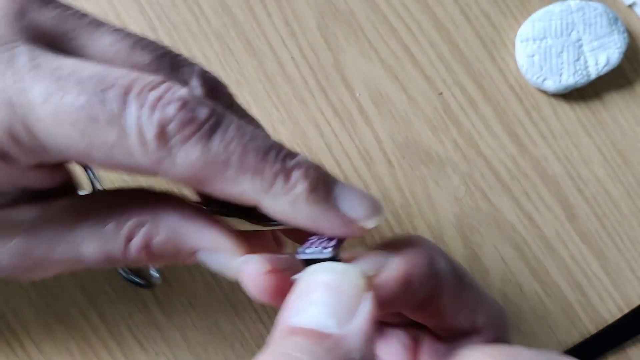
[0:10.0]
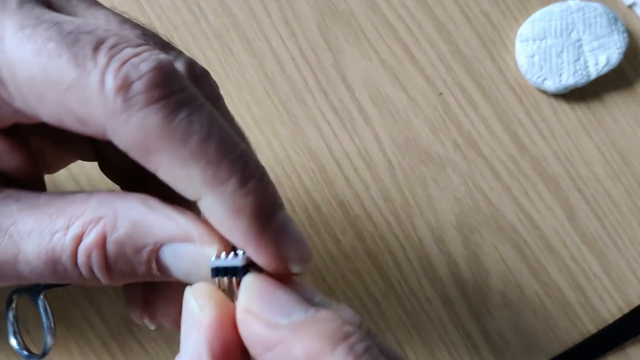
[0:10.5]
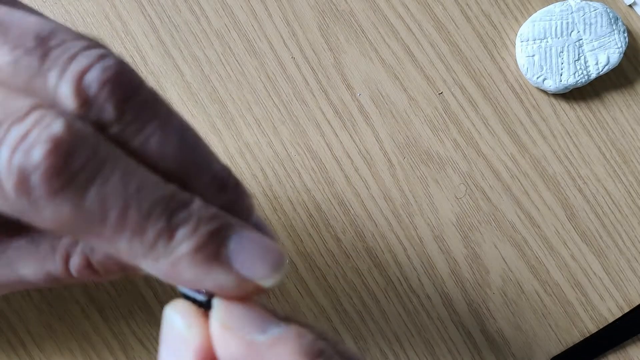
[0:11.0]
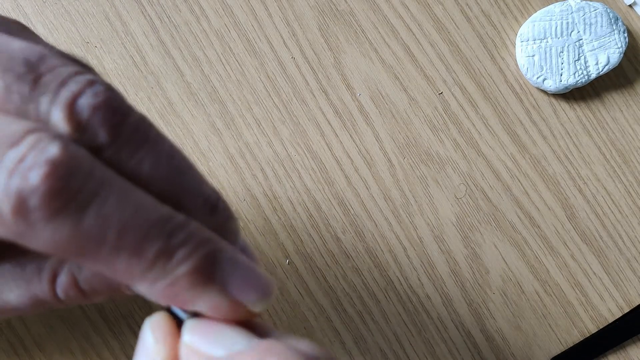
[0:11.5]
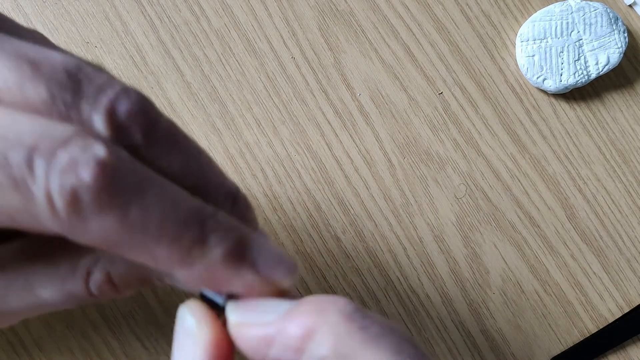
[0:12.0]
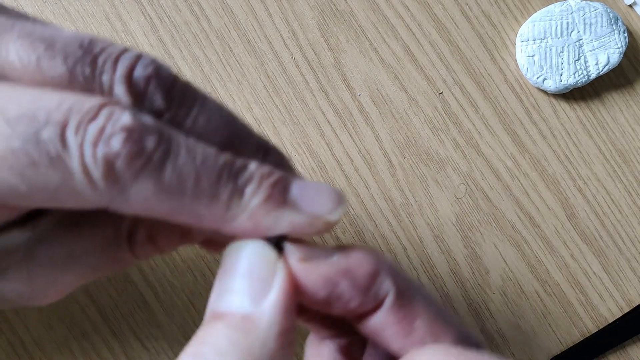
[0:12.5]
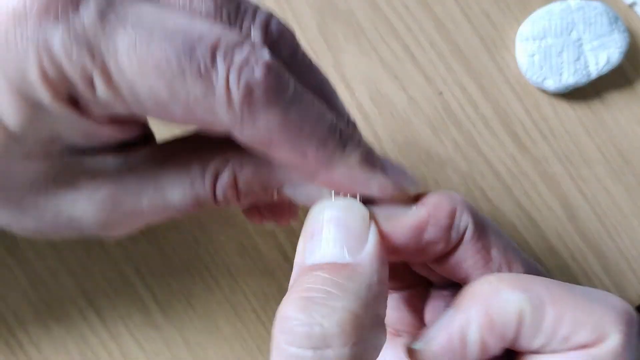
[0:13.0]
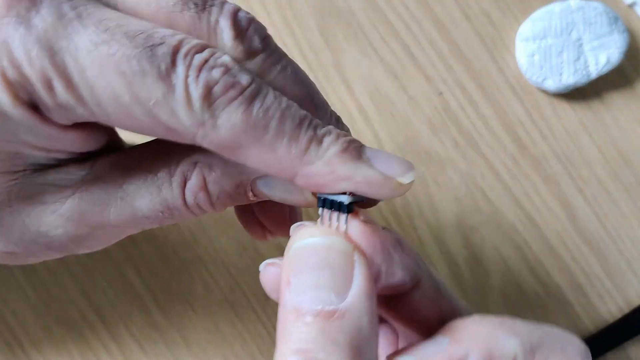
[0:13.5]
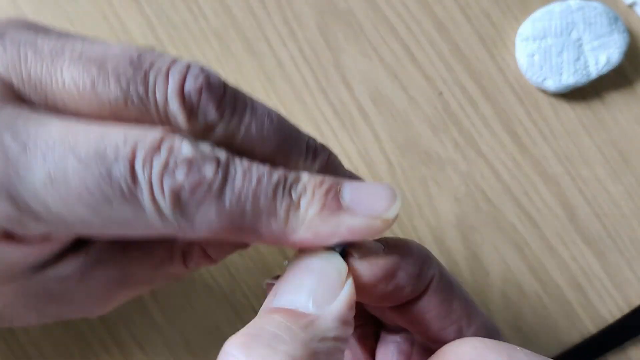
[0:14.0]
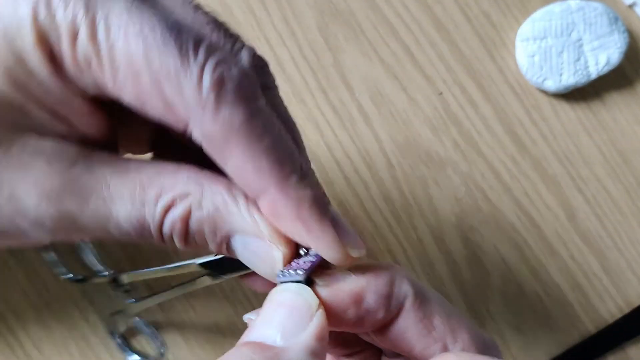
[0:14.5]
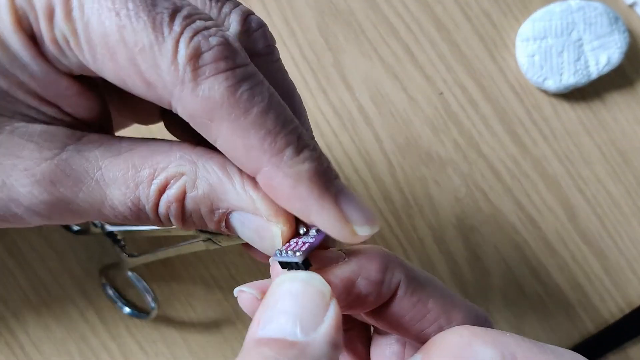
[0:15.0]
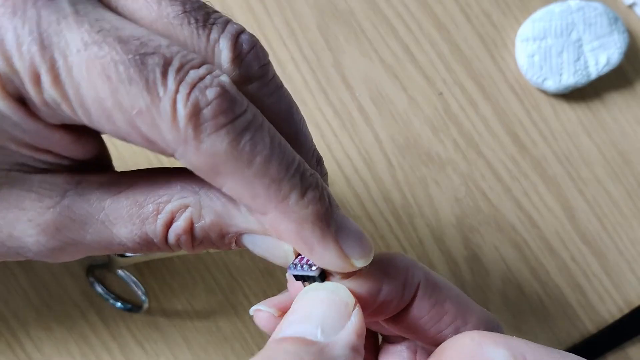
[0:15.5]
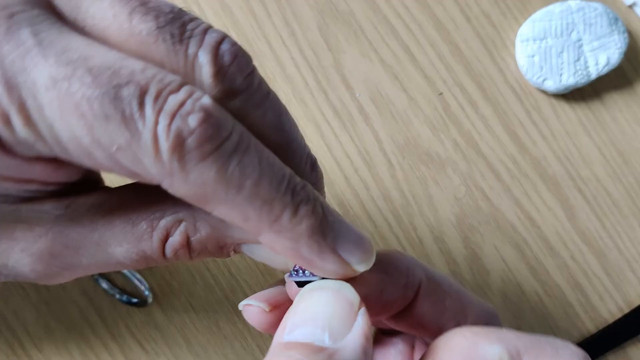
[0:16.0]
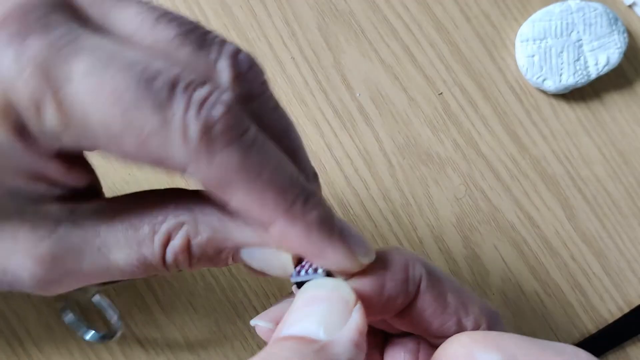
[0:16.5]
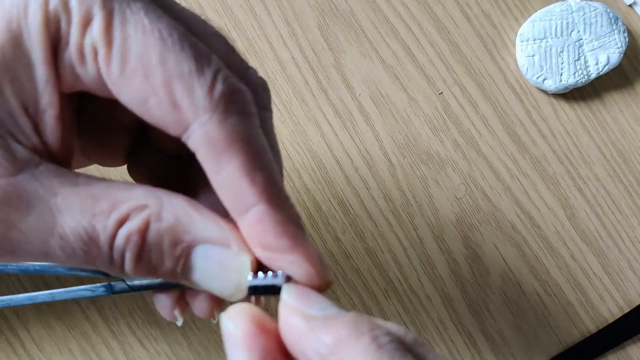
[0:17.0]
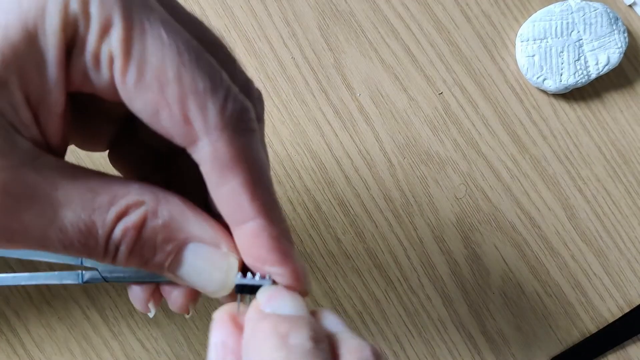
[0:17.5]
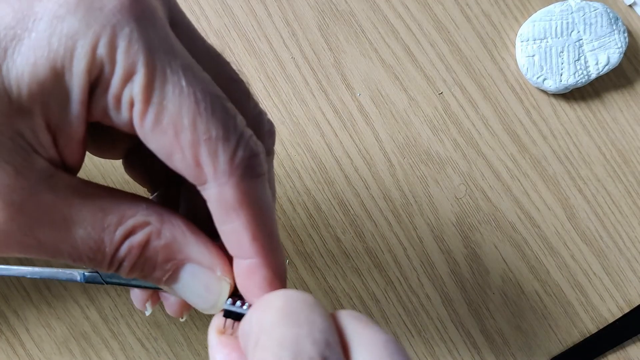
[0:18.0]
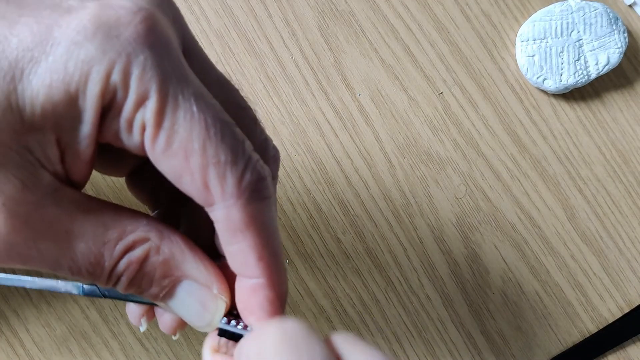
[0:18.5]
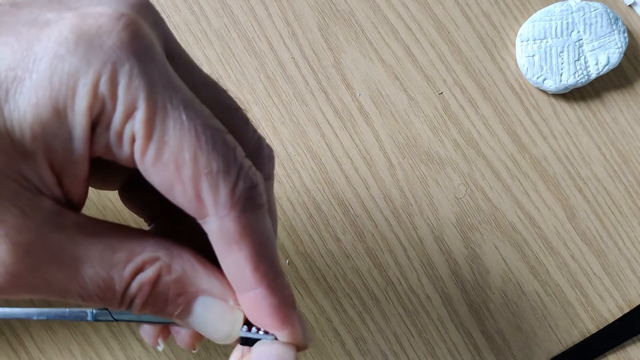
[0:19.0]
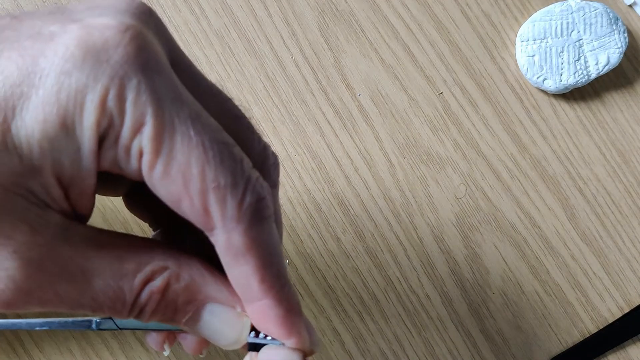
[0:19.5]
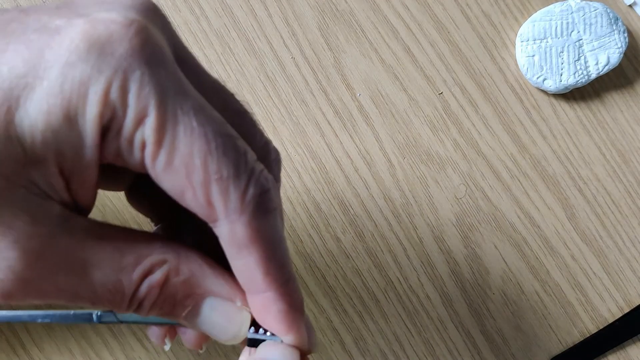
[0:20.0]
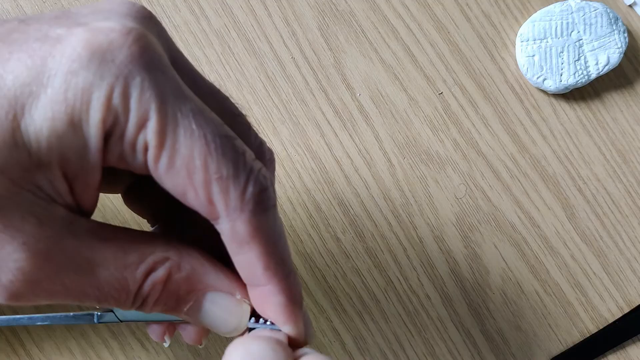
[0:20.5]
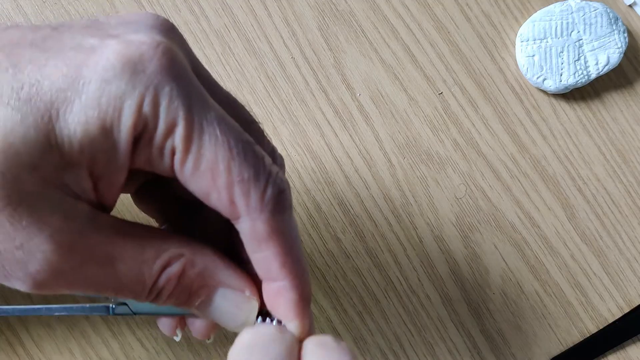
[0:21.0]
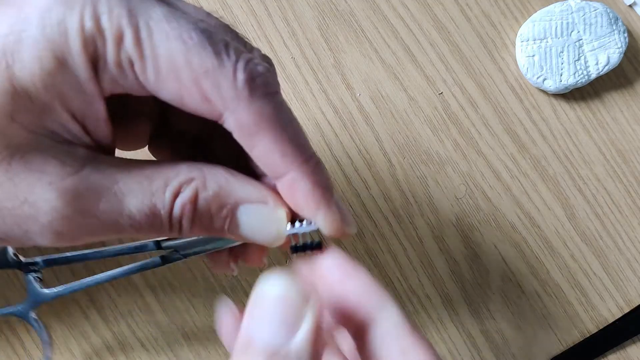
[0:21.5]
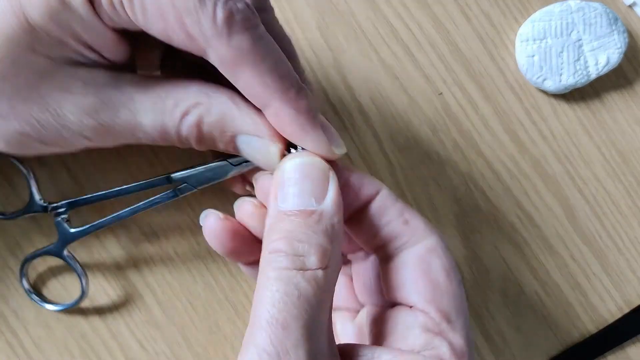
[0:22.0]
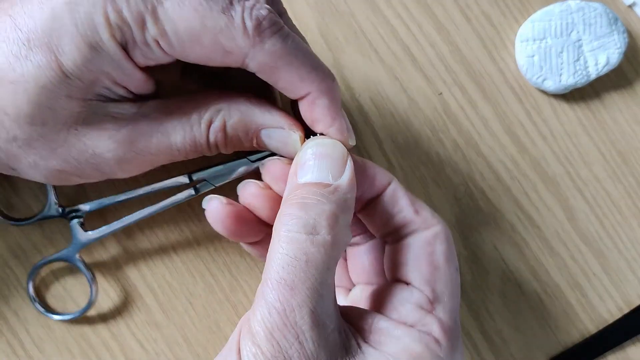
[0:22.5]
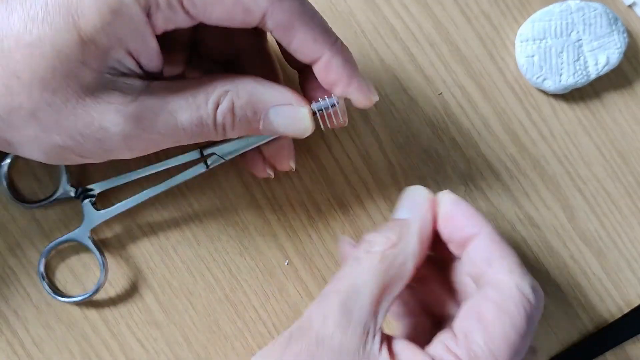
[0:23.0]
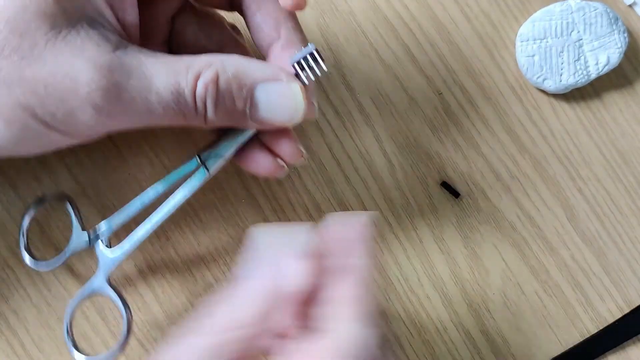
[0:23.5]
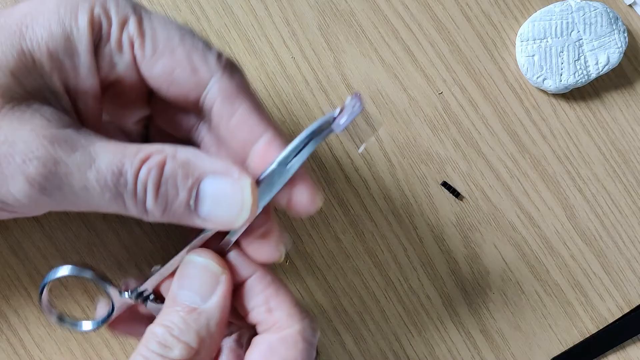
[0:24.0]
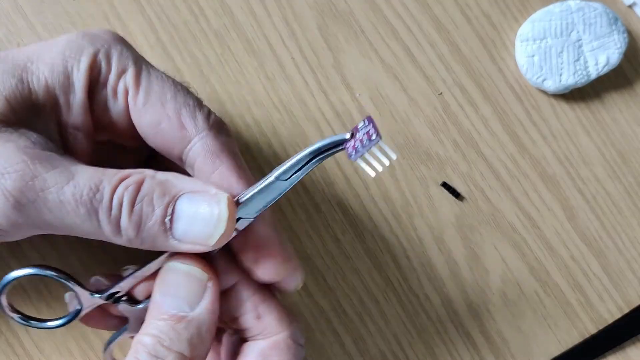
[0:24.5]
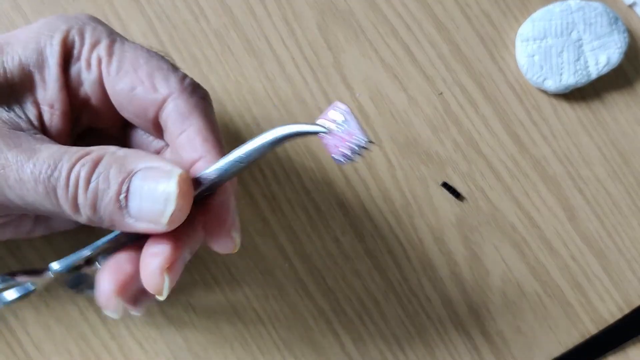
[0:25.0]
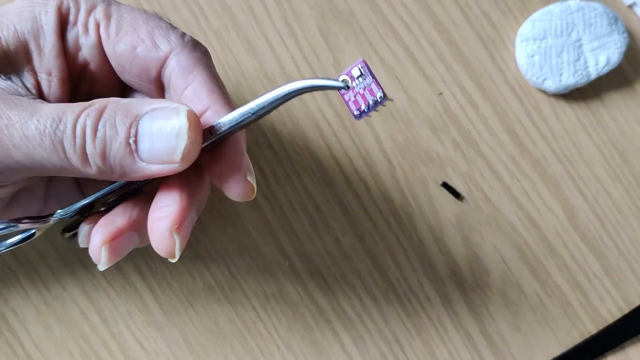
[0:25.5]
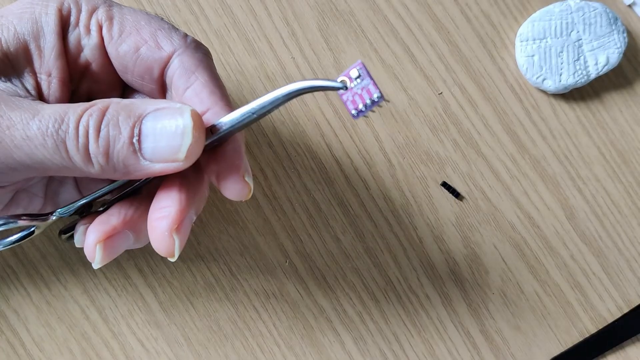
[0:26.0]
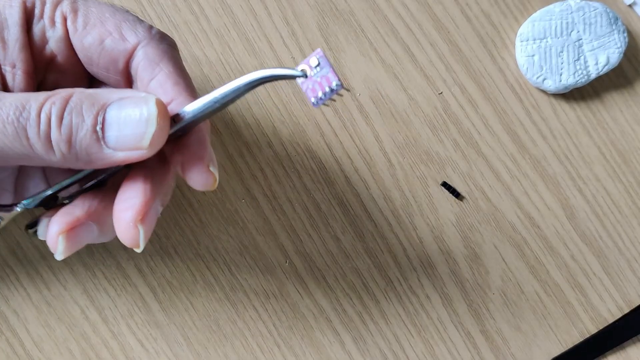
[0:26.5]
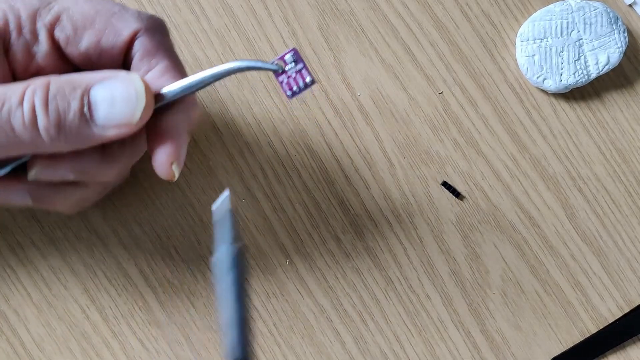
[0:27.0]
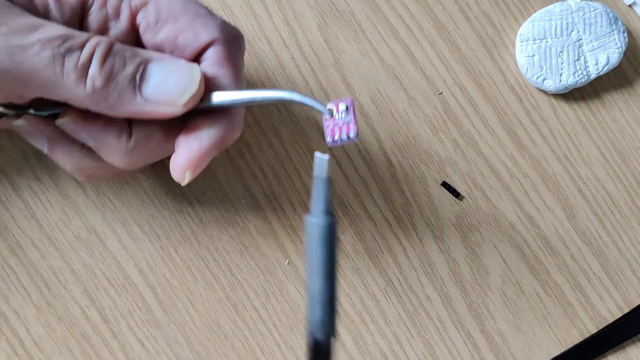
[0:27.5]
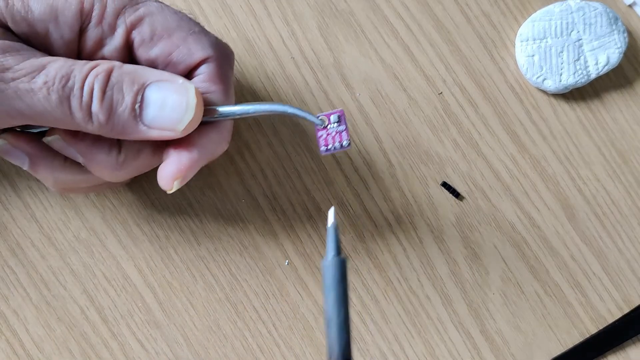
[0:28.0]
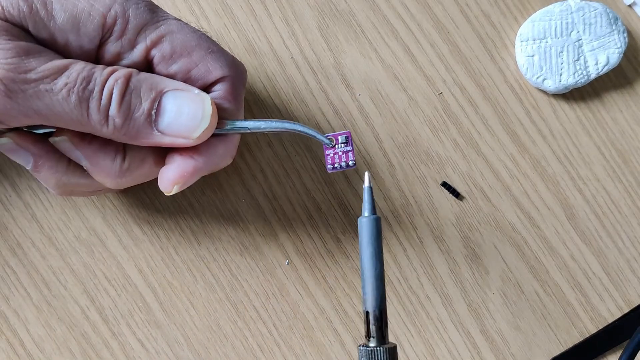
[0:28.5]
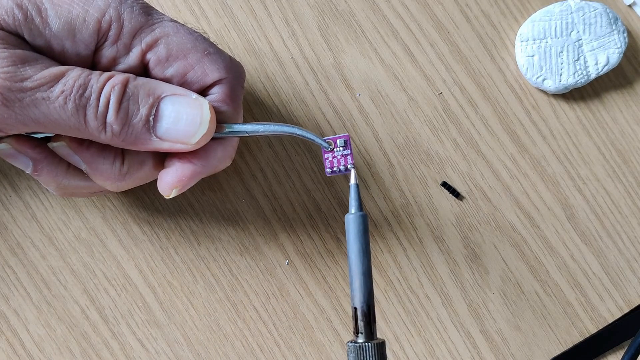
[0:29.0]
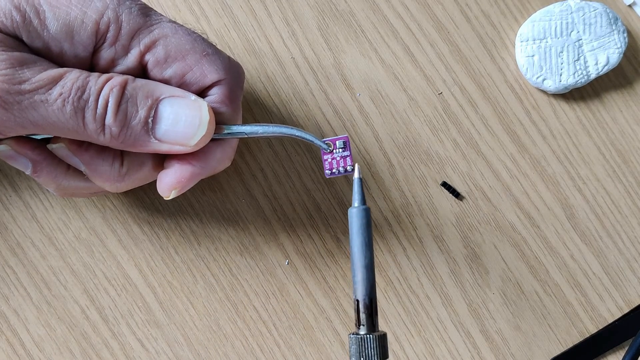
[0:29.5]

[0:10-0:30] Two hands try to remove header pins that are attached to a tweezer, at first without using any heat. As the video progresses, the man holds a tweezer in his left hand and, in his right hand, something that heats up the pins, apparently so that they become easy to remove. He uses the tweezer along with a desolder to make the process faster.